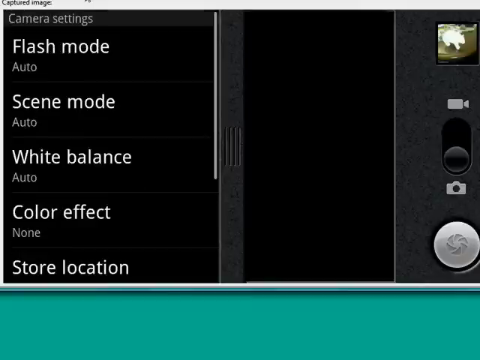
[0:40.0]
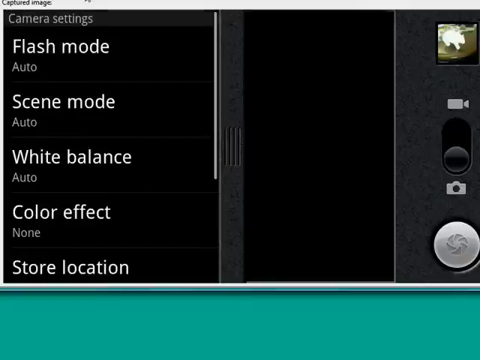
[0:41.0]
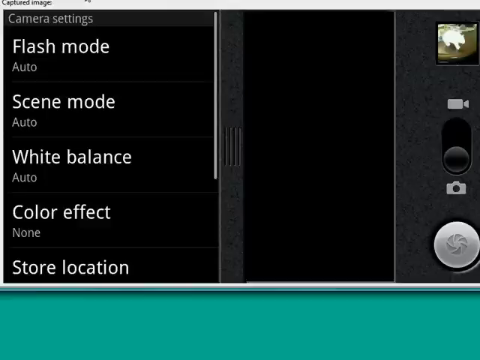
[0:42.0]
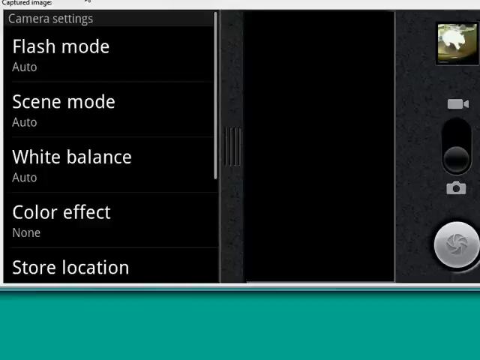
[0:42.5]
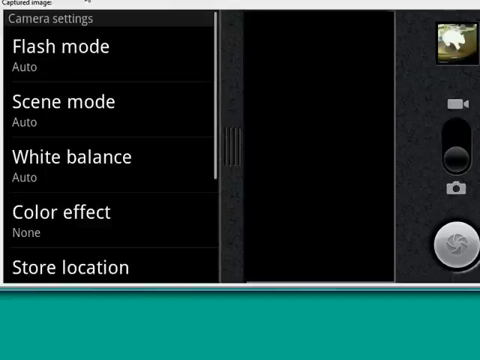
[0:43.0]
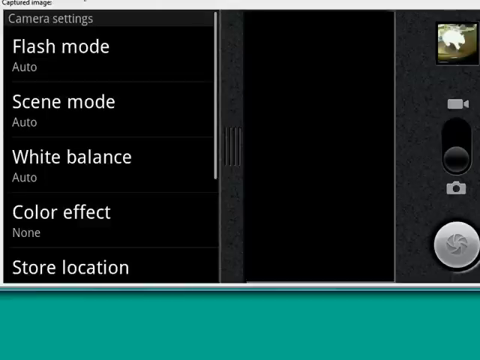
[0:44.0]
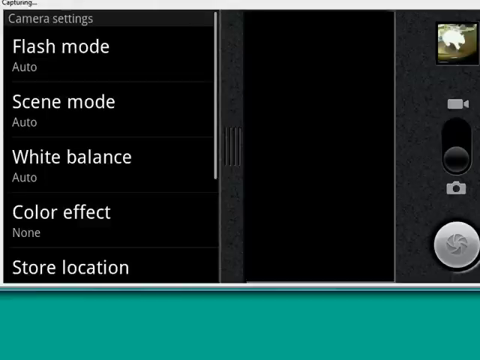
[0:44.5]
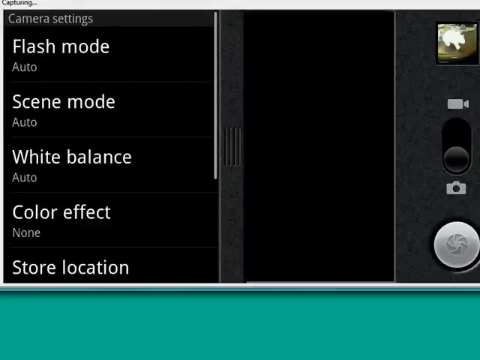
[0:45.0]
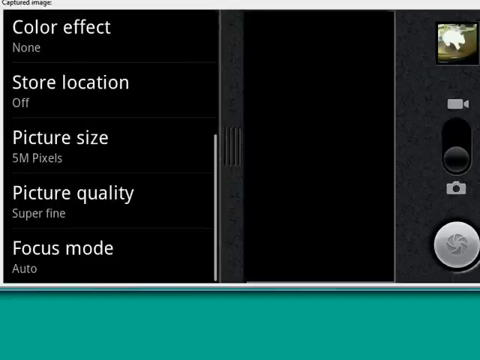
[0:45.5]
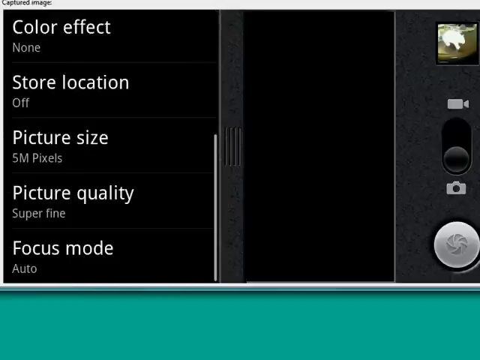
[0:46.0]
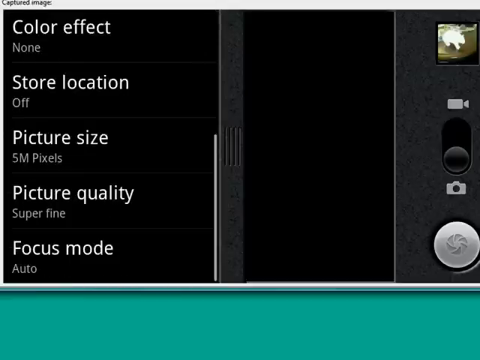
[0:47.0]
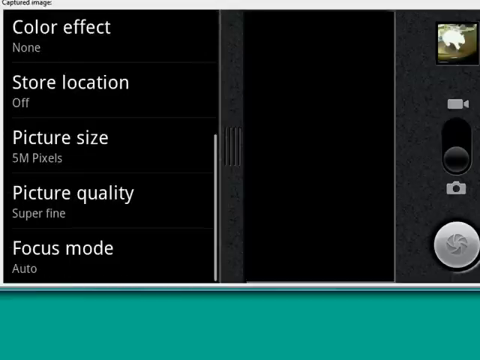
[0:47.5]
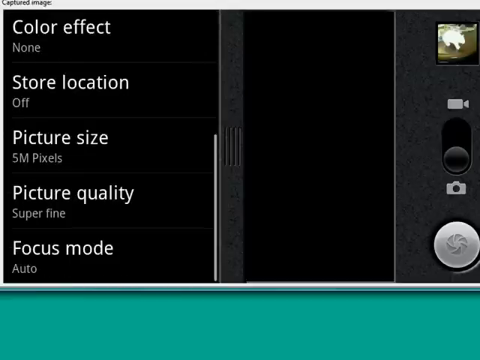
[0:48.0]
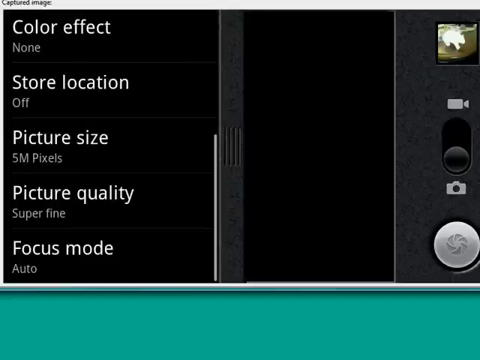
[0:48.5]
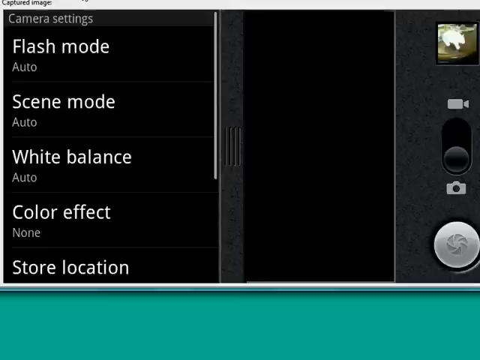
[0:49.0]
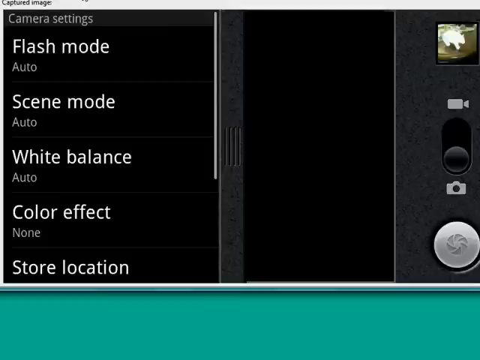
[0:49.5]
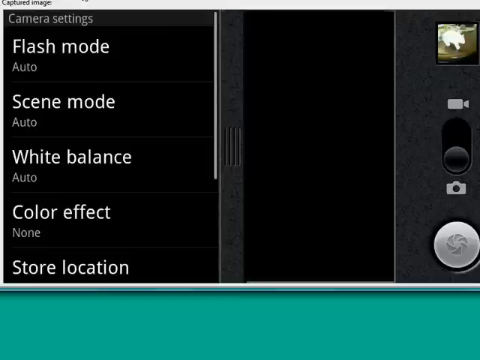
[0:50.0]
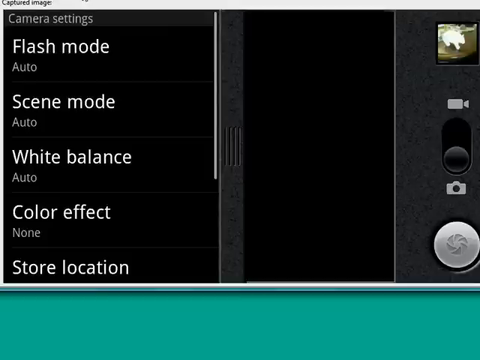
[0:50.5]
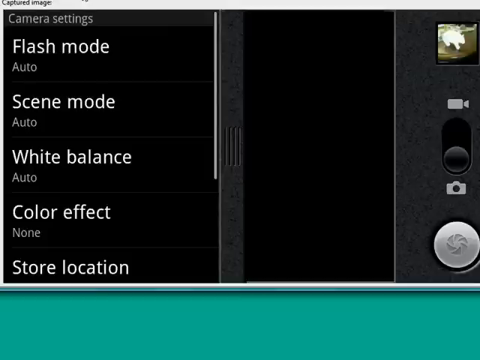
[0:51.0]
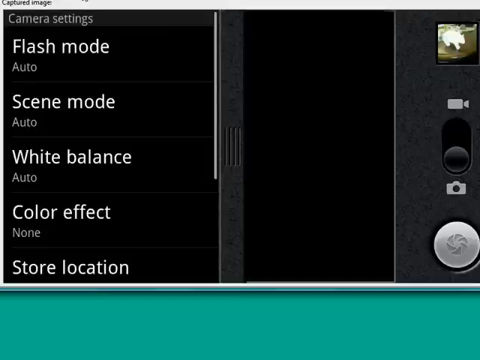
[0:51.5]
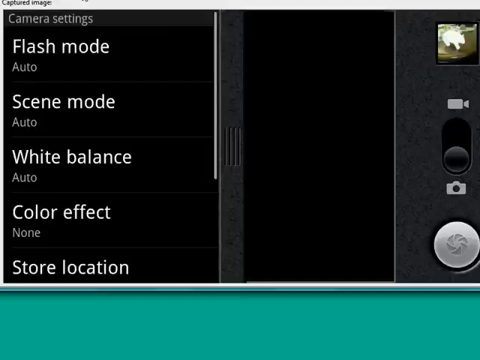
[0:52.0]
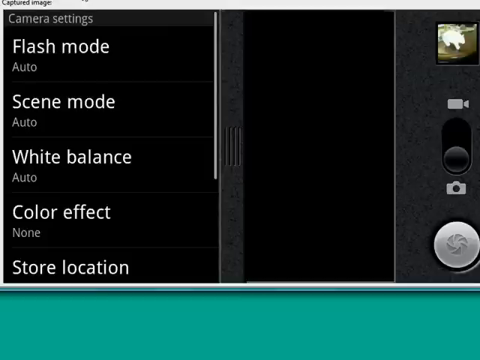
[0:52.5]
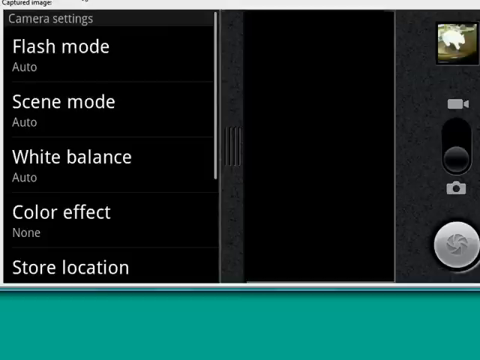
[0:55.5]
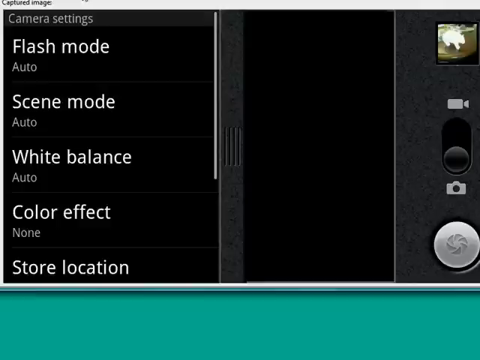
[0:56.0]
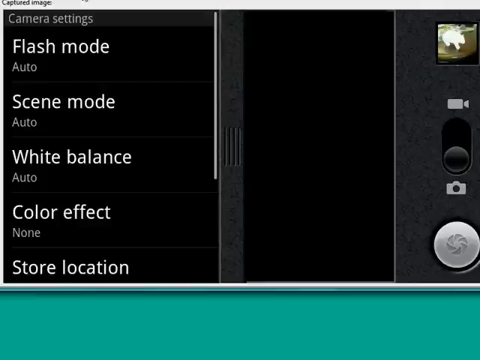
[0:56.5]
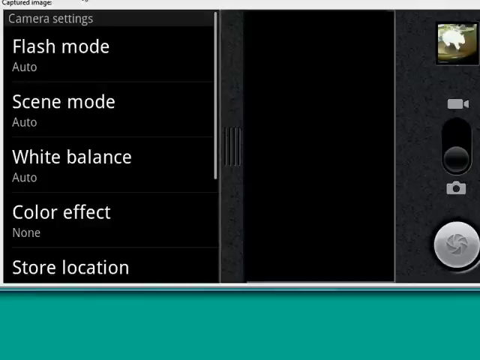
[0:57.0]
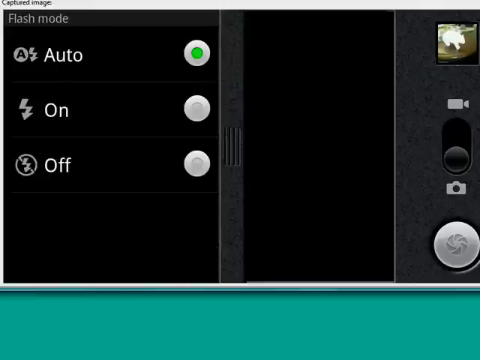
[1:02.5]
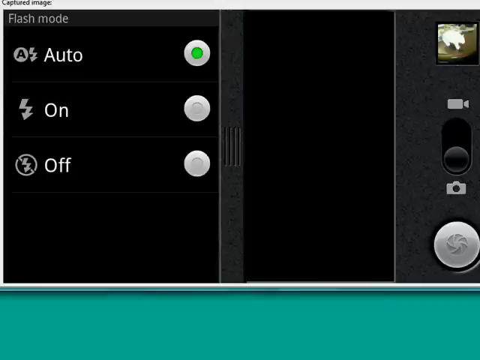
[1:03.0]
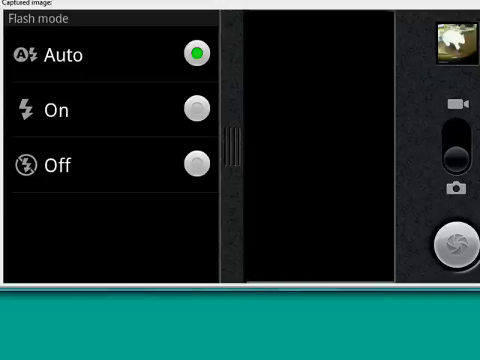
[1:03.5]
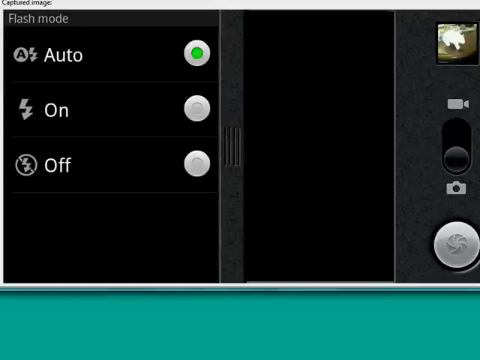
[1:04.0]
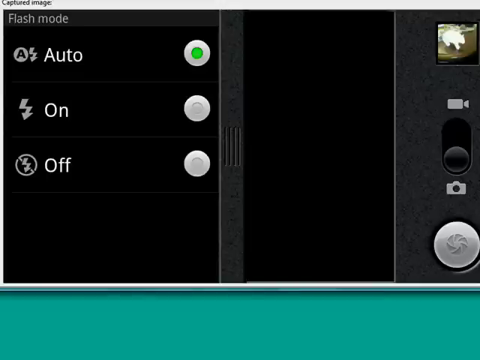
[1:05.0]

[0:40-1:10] The camera application's interface shows its control buttons and icons on the right side of the screen, with the shutter button as the lowest button. The camera and recorder toggle switch is on the right; the camera icon is light gray, the camcorder is light gray, and the toggle switch is black. A picture preview at the top right appears to show a cat on a countertop. On the left side, the camera settings are out, listed from top to bottom as flash mode, scene mode, white balance, color effect, and store location, in white font on a black background. The user scrolls down and an additional option, focus mode, comes onto the screen, currently set to auto. The user scrolls back up to the top and the original settings are in view again. Each setting name is in a larger font with its detail in a smaller font underneath. The border on the right side of the interface is gray mixed with black in an abstract pattern, the middle is solid black, and the bottom is a teal border.